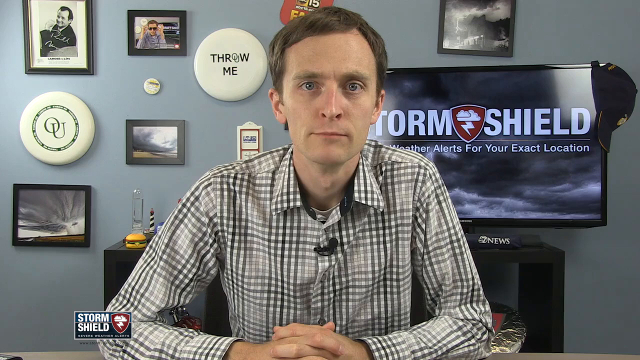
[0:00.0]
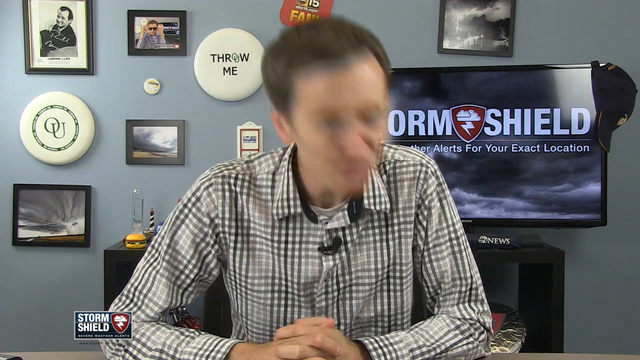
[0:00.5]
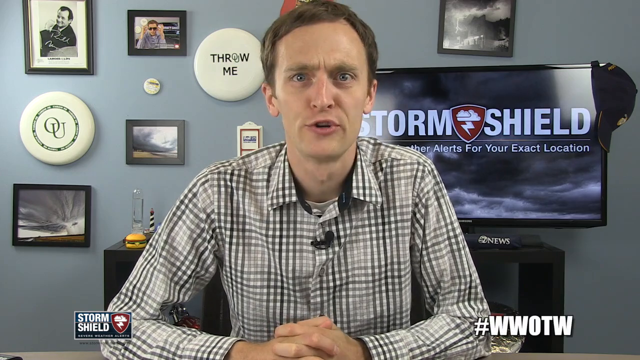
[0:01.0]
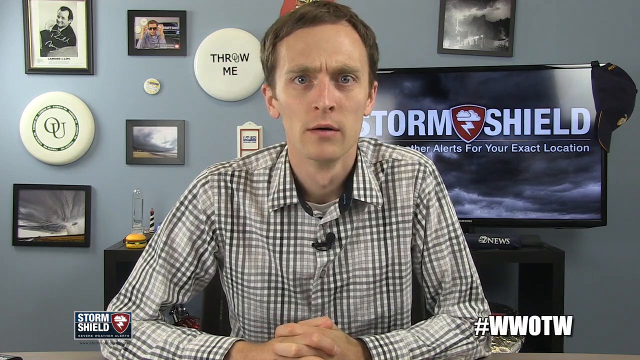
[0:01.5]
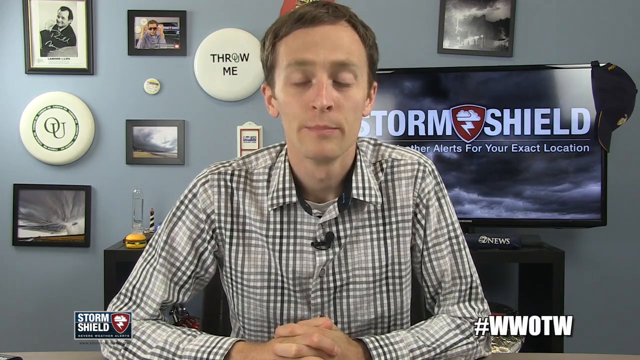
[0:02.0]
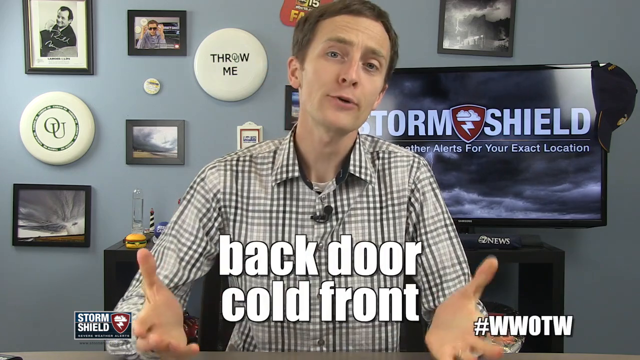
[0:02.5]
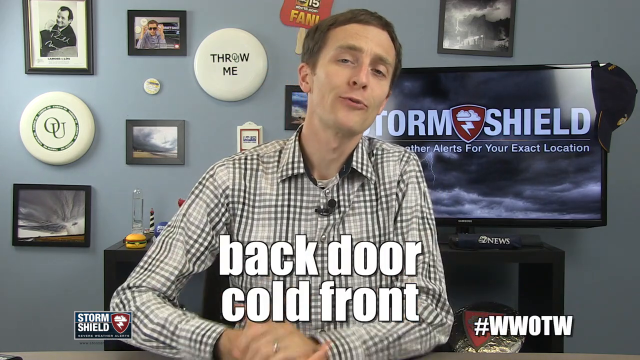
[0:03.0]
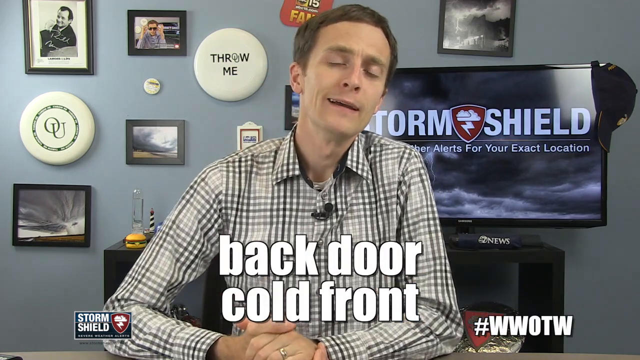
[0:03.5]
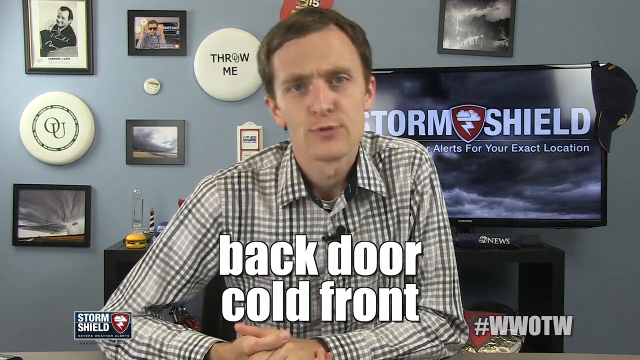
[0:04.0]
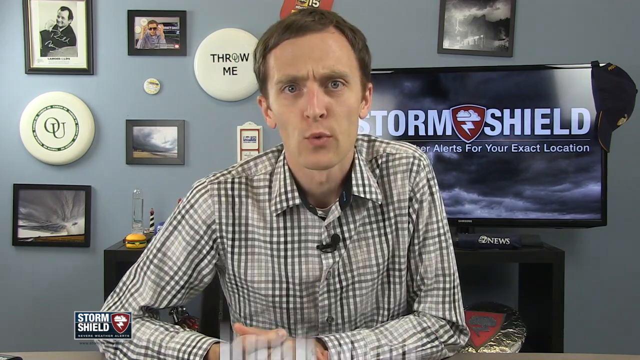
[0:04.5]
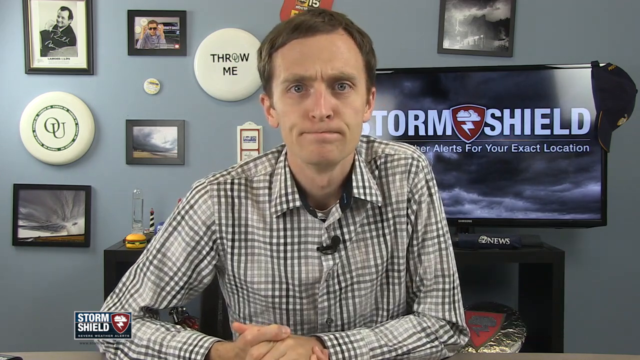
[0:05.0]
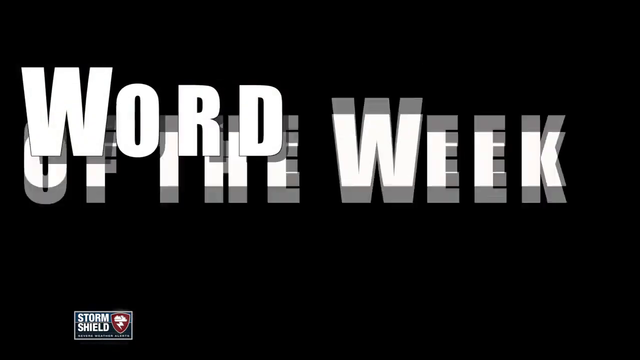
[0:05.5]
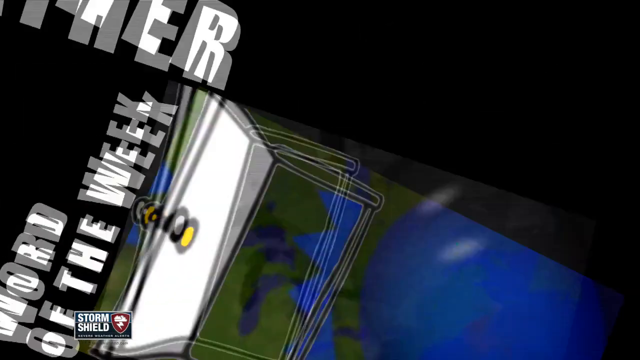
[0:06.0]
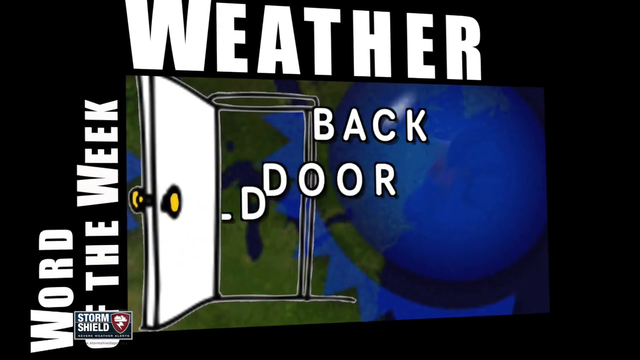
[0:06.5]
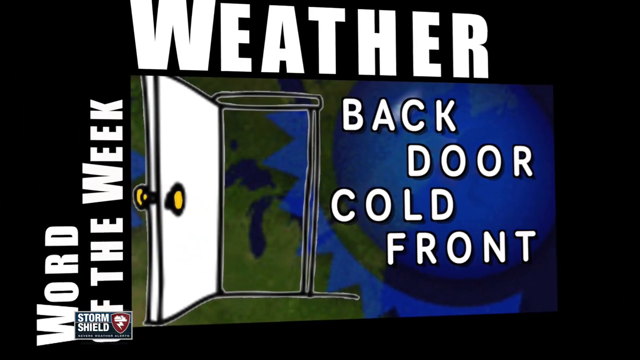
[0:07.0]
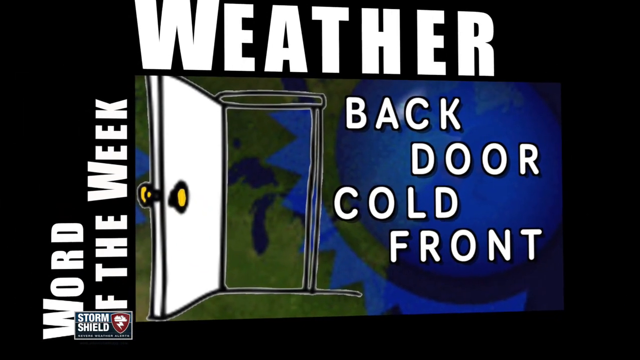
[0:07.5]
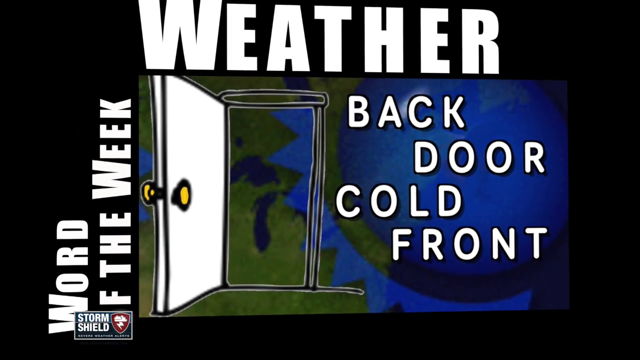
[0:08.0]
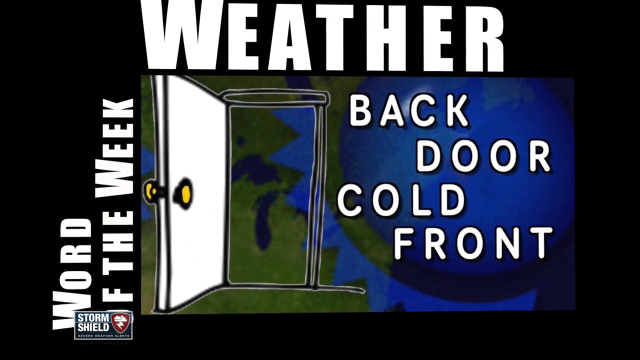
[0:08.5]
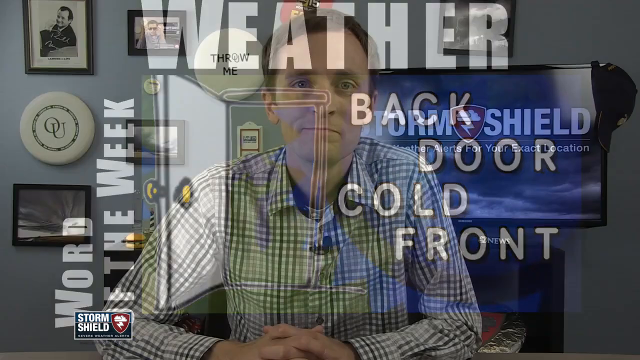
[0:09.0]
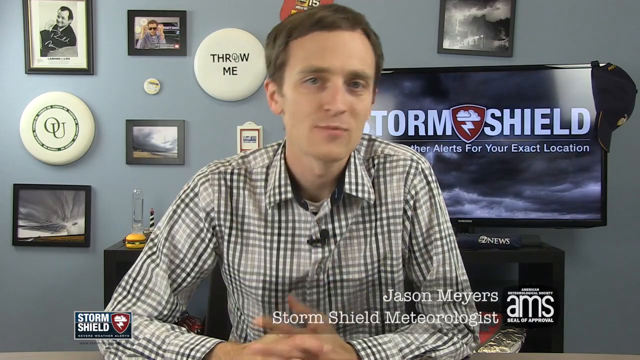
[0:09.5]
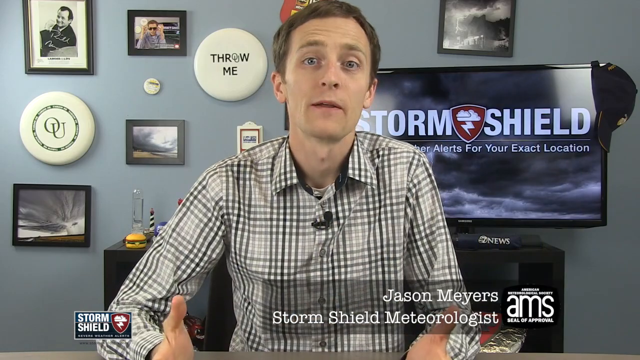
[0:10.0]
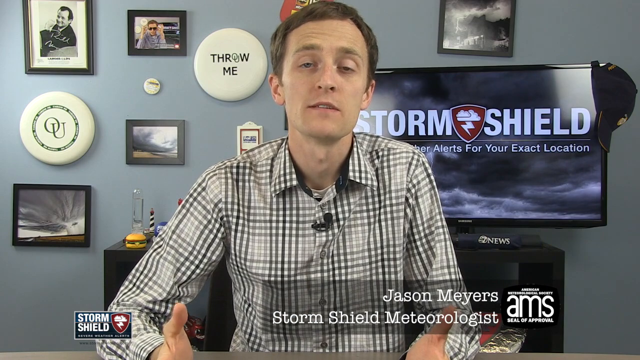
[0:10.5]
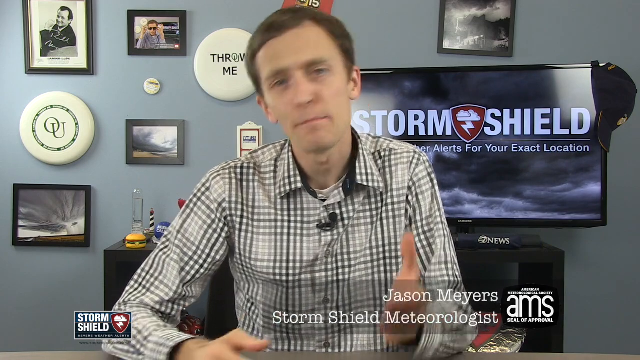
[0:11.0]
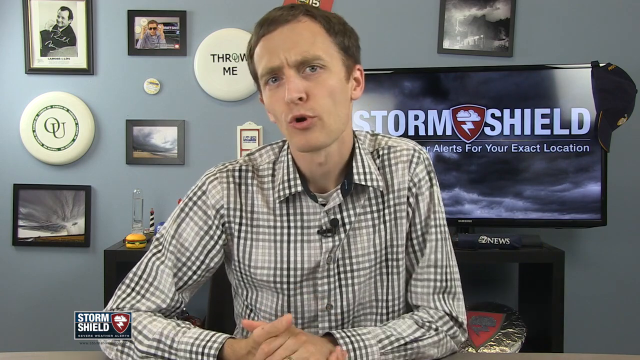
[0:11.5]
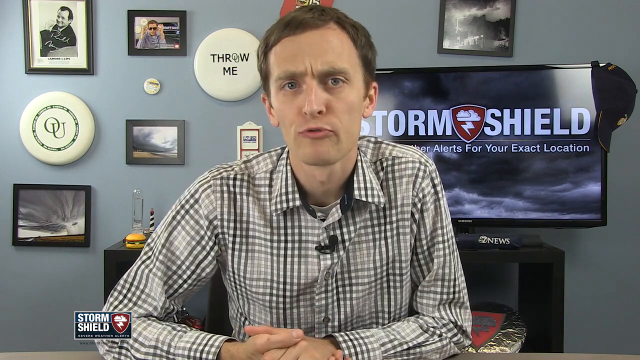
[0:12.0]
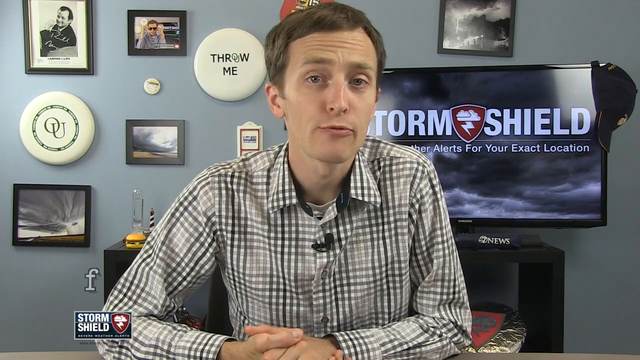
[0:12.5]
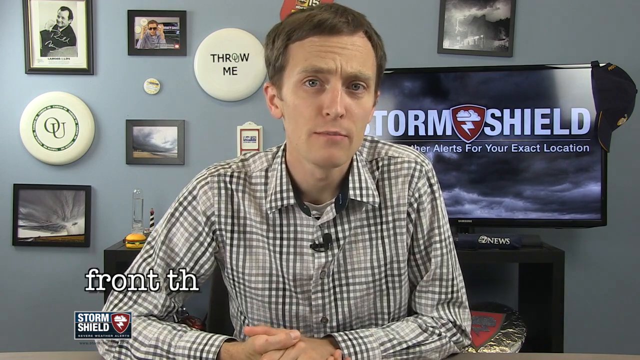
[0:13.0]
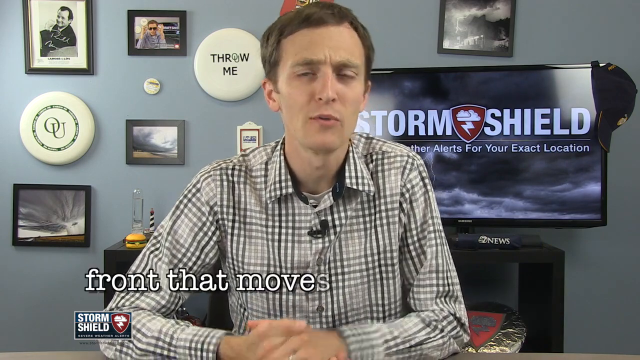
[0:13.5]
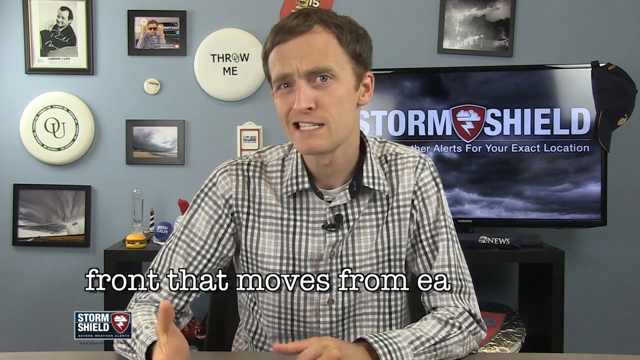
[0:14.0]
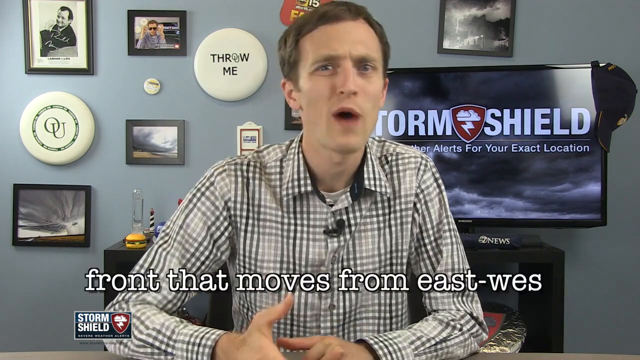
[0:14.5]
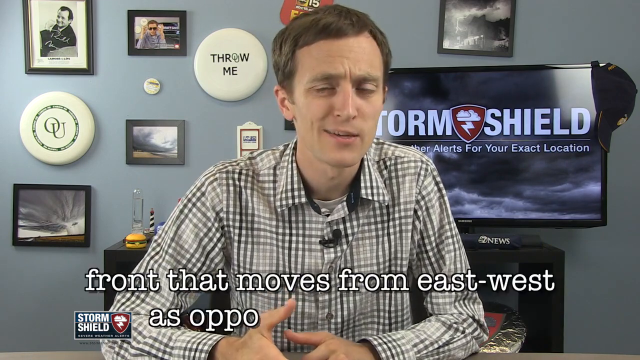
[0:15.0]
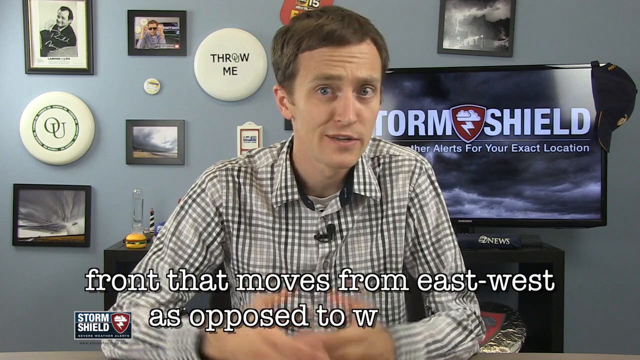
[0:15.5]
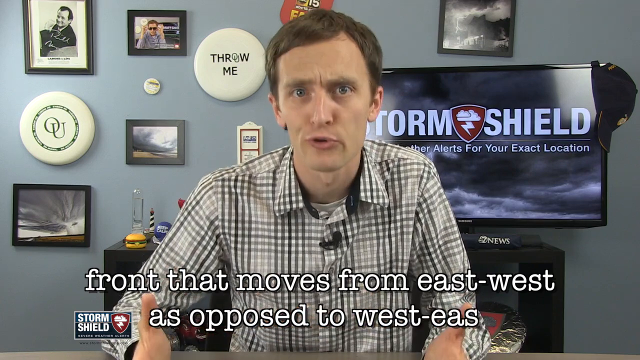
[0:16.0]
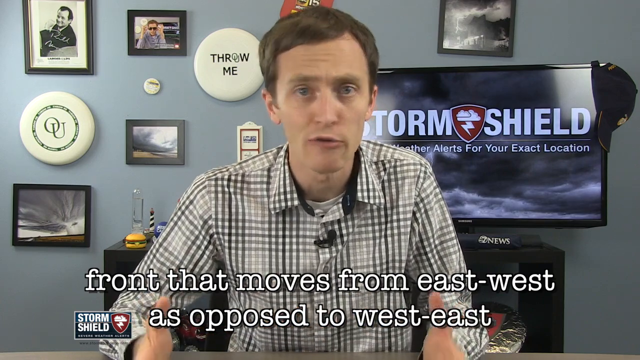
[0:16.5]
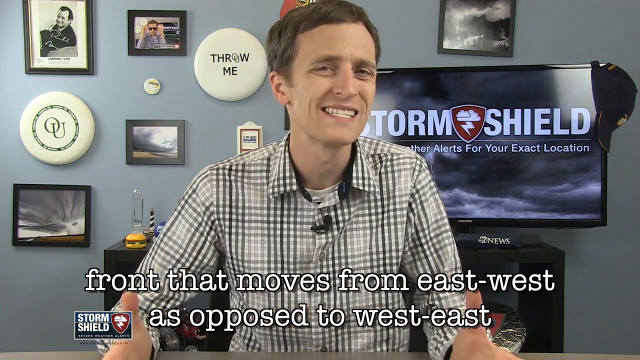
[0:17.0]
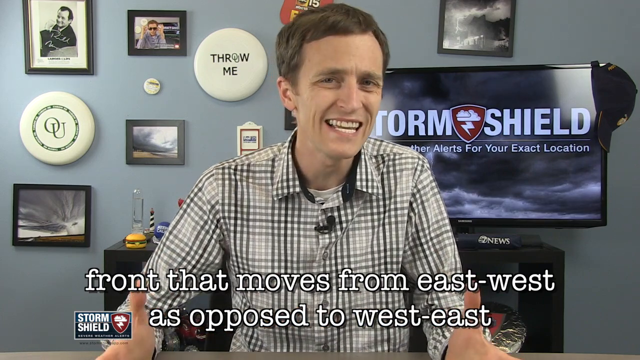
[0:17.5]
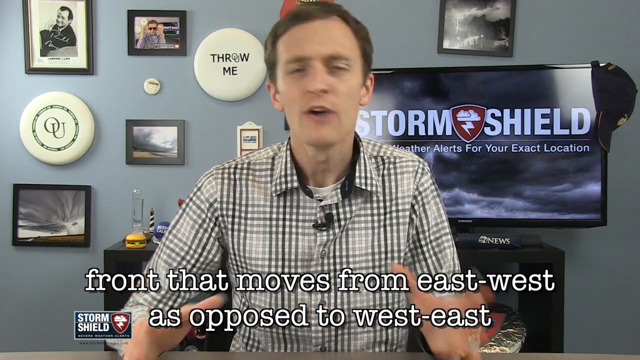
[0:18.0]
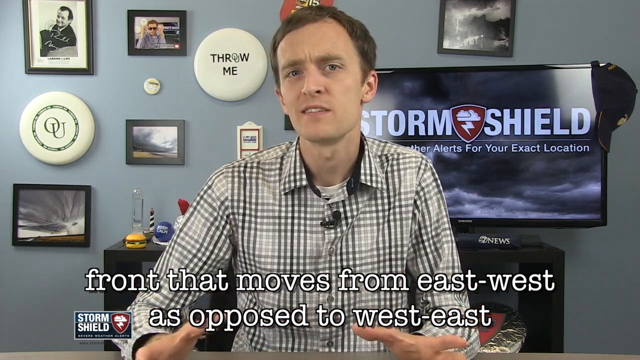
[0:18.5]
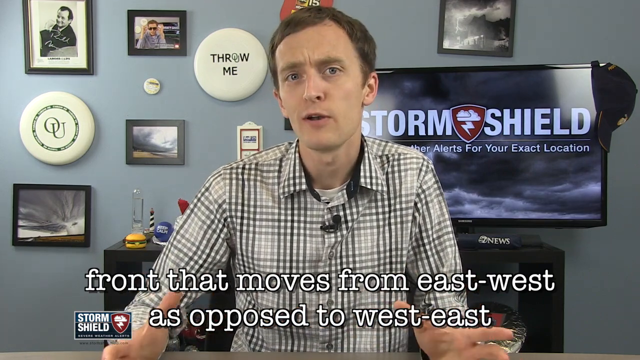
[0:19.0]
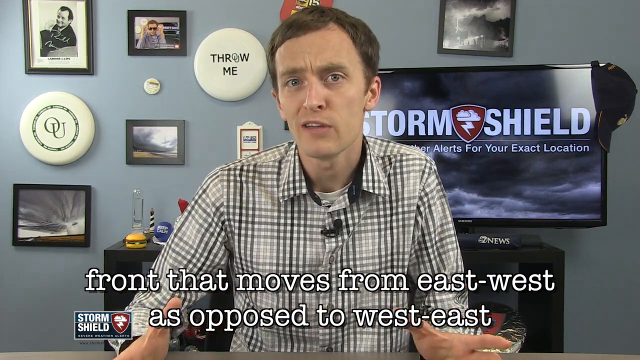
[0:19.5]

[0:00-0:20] A gentleman appears to be in some type of office, possibly a home office. A screen behind him reads "Storm Shield, weather alerts for your exact location." On the wall behind him are quite a few photos and a pretty large Frisbee with "throw me" on it. He is speaking and is very animated. Text in front of him reads "back door cold front" and "Storm Shield," and in the bottom right-hand corner it reads "#WWWOTW." The screen goes black and "Word of the Week" appears. Next comes an animated door, with "weather" at the top and "backdoor cold front," and the door is shown open. His name then appears as Jason Myers, a storm shield meteorologist, along with the text "front that moves from east to west as opposed to west to east."